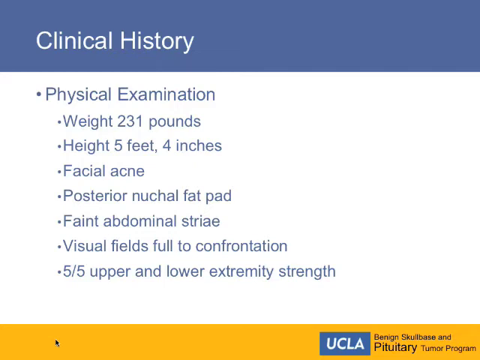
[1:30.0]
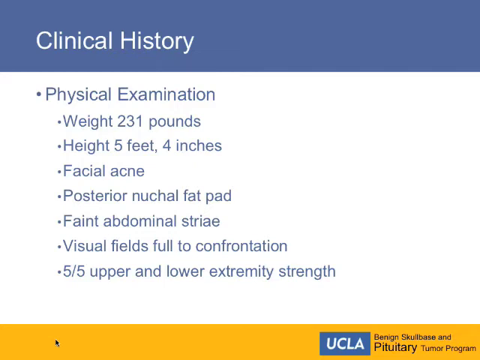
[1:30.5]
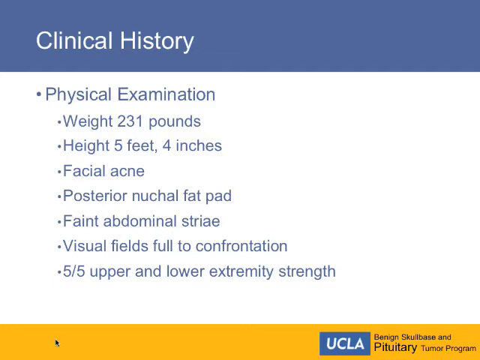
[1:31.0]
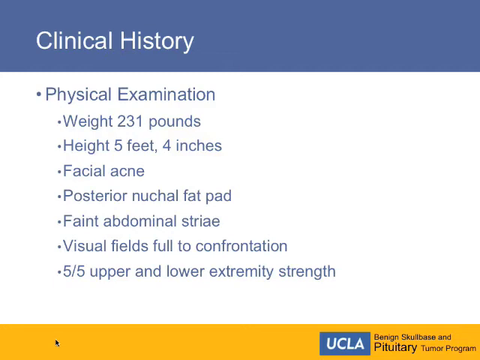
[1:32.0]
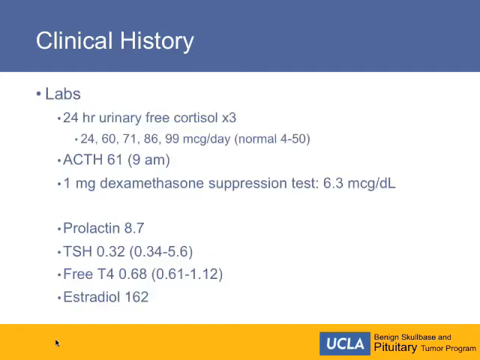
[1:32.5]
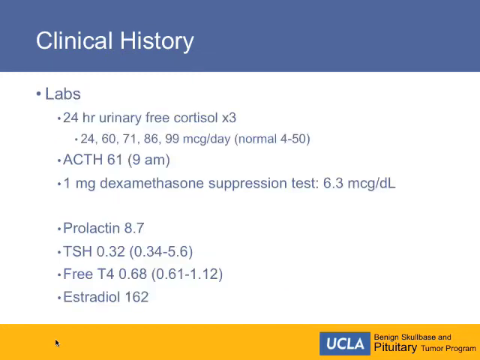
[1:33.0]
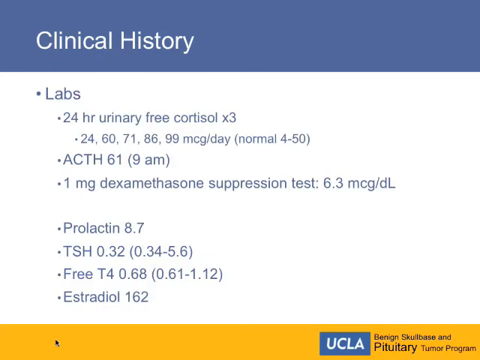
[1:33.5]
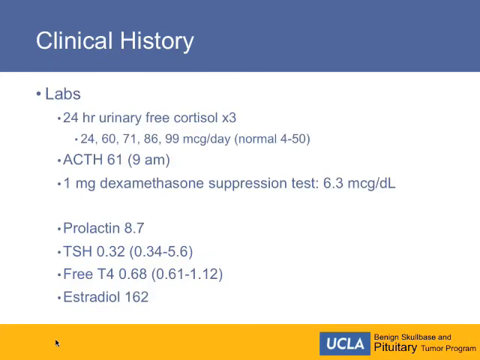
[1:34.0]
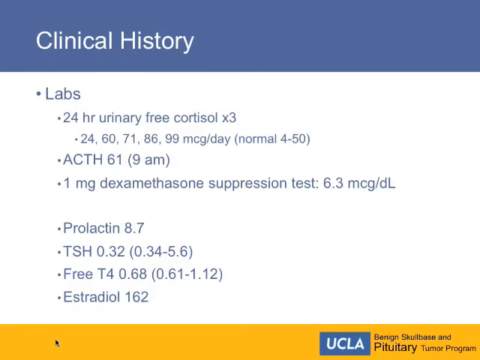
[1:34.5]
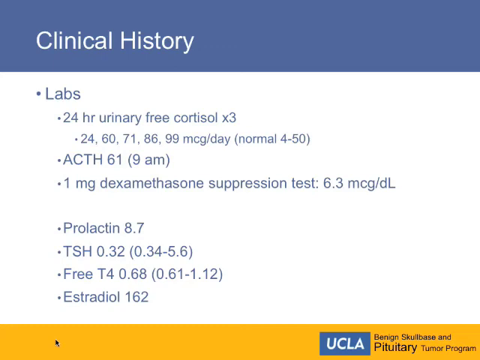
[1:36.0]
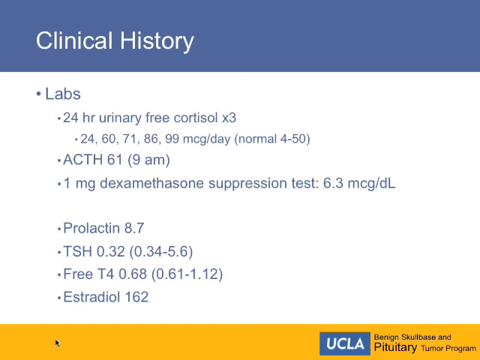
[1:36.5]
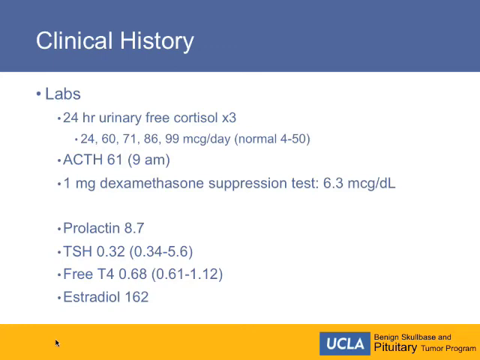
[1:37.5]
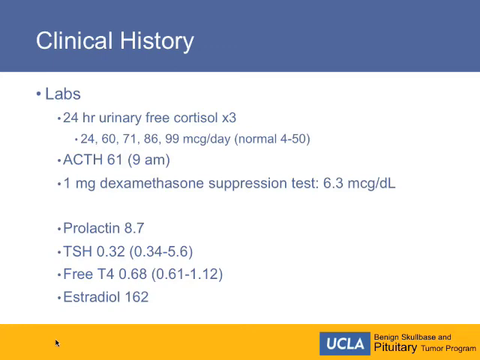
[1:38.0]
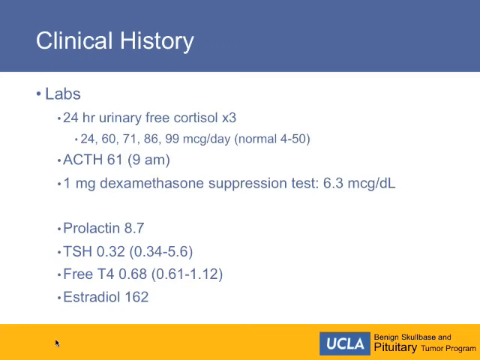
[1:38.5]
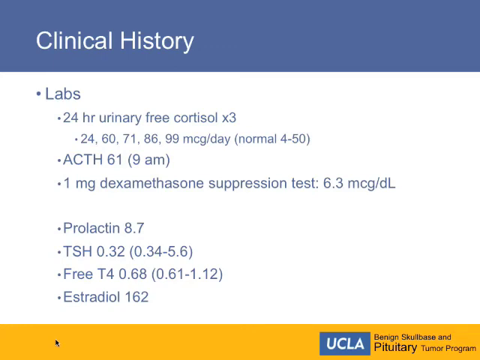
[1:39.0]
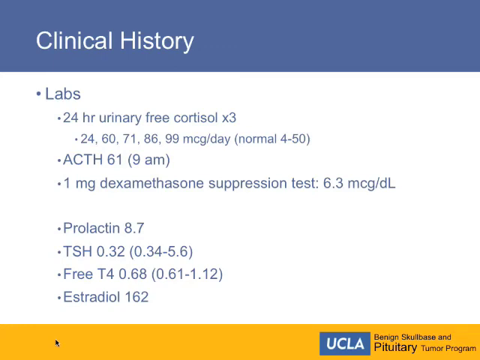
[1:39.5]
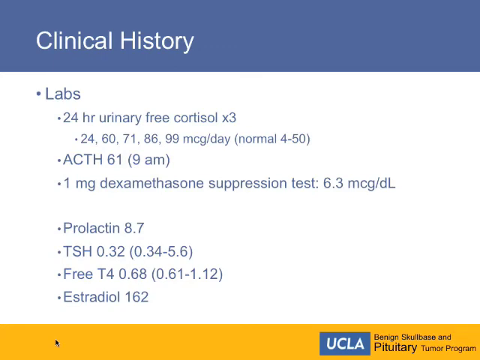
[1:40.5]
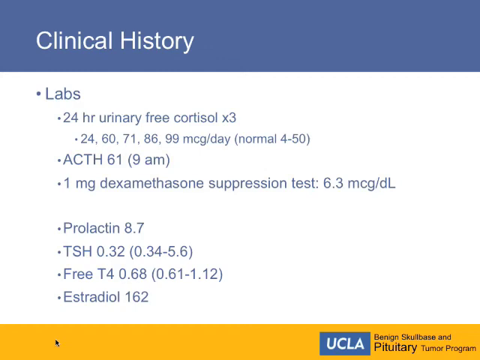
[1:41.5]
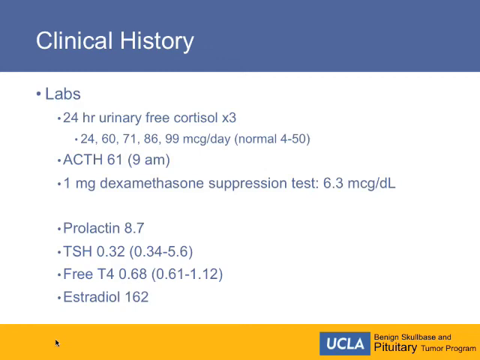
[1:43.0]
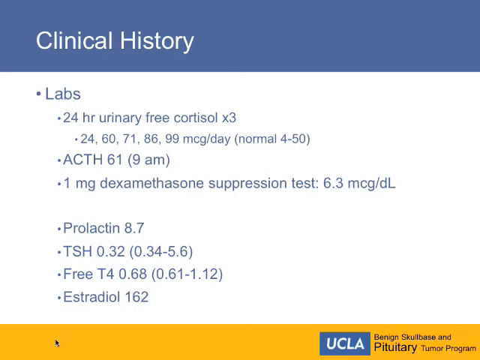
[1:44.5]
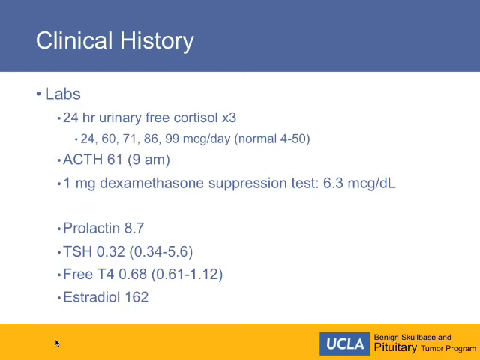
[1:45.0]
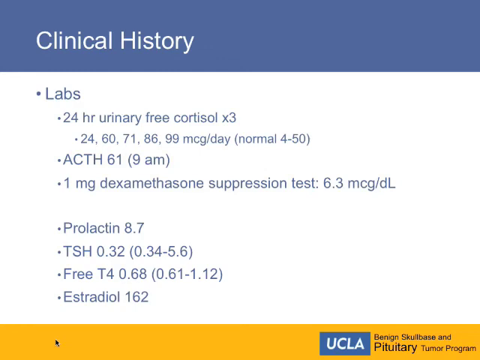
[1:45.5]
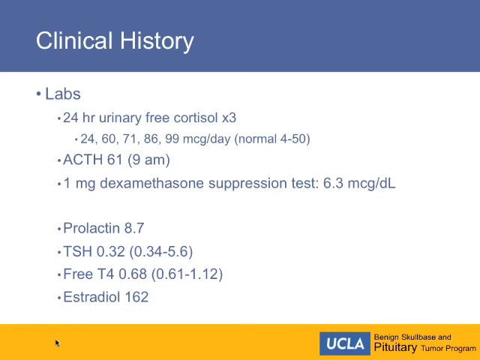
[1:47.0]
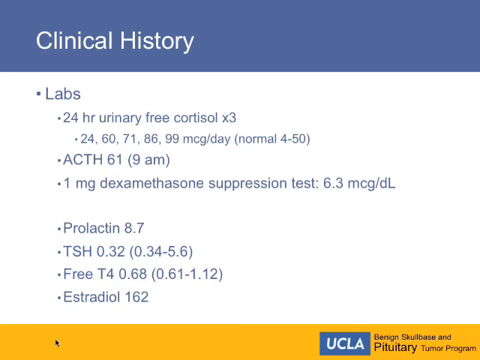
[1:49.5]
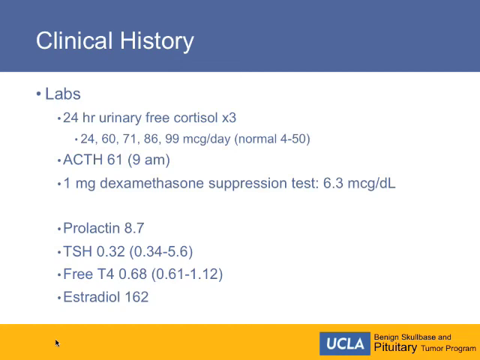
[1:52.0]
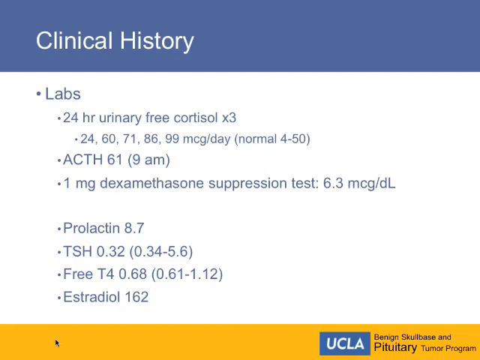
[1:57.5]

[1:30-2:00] The clinical history continues with a physical examination section, which lists "231 pounds," "5 feet 4 inches," "facial acne," "posterior nuchal fat pad," "faint abdominal striae," "visual fields," and "5 out of 5 upper and lower extremity strength." Below that is a heading reading "labs," which lists "24 hour urinary free cortisol" with "times 3," a series of numbers, and "milligrams a day," followed by "ACTH 61 at 9am." More bullet points appear on the same page, including a "1 milligram dexamethasone suppression test" with "6.3 mcg/dl," "prolactin 8.7," "TSH 0.32," "free T4," and "estradiol."